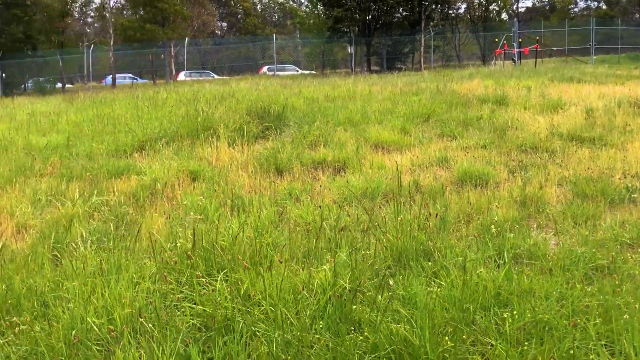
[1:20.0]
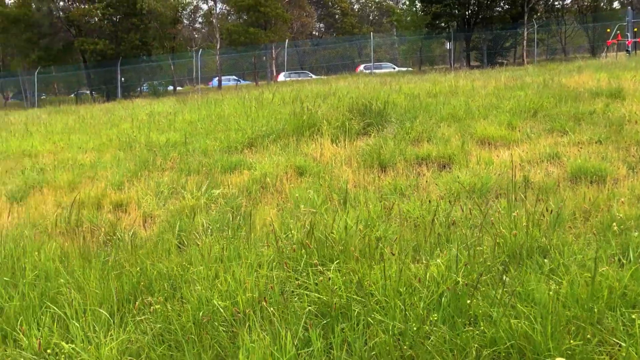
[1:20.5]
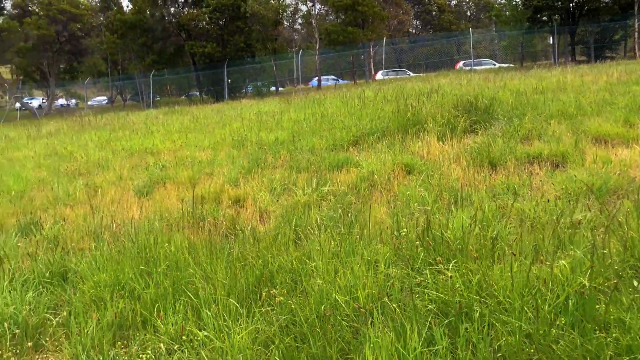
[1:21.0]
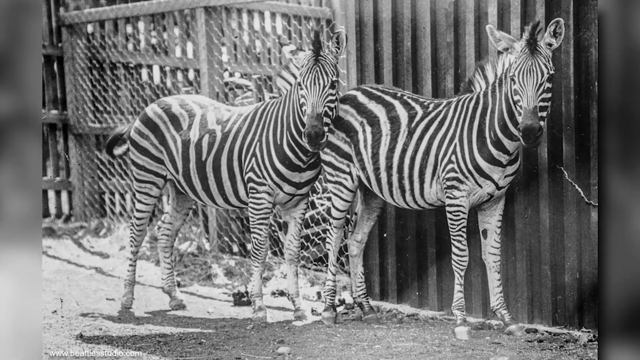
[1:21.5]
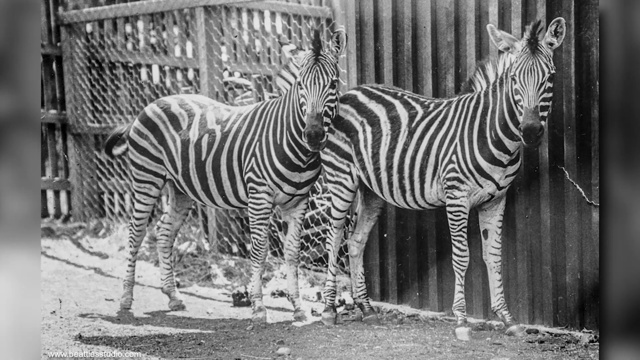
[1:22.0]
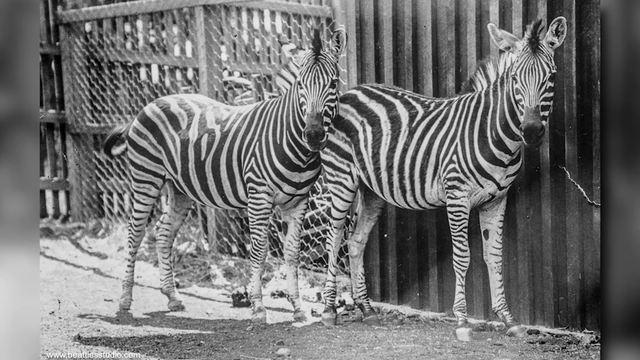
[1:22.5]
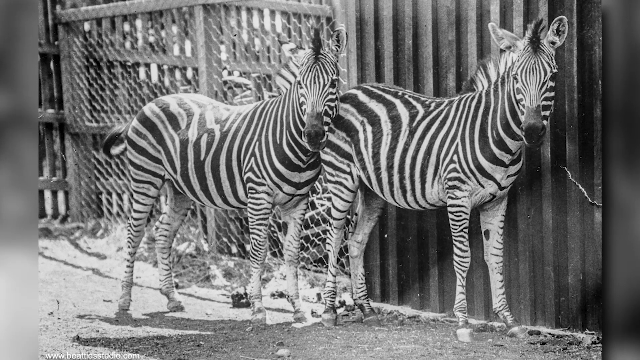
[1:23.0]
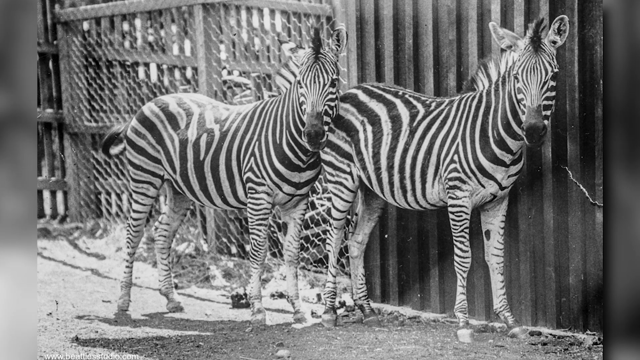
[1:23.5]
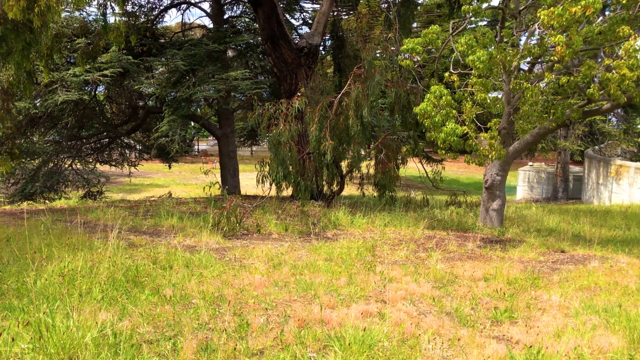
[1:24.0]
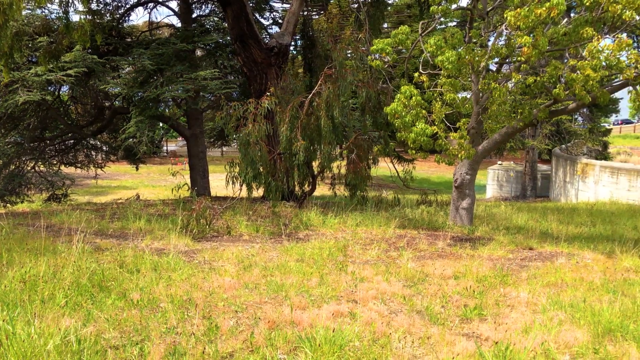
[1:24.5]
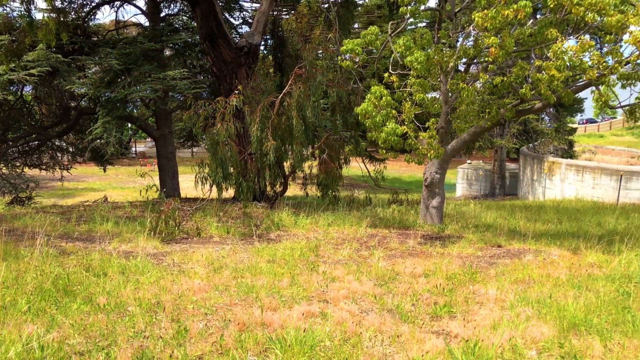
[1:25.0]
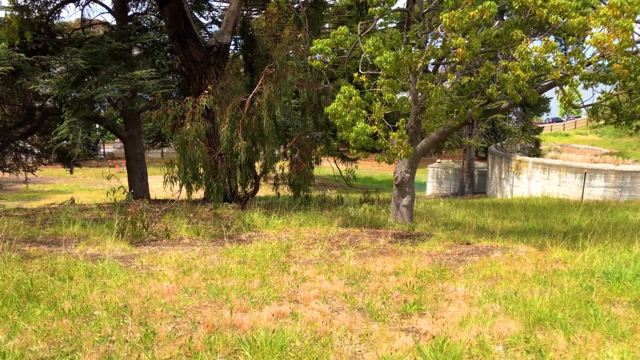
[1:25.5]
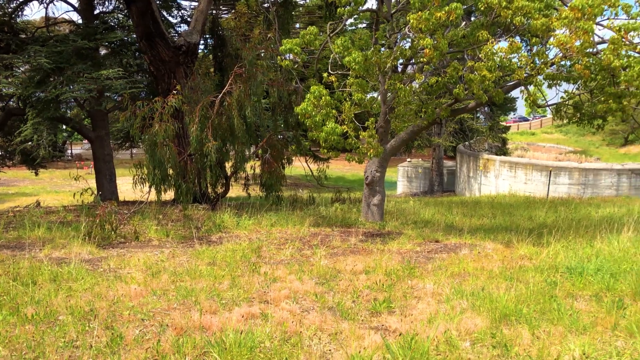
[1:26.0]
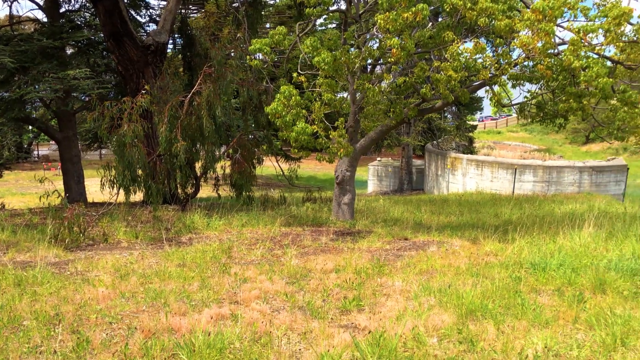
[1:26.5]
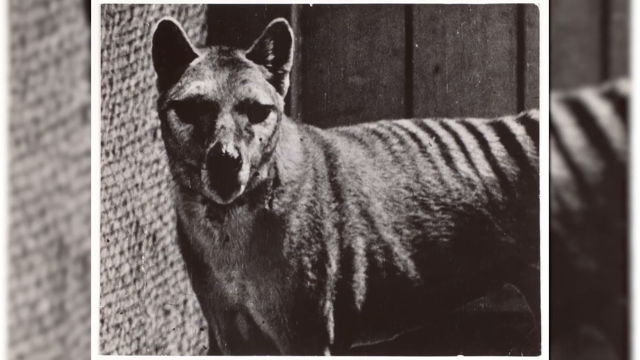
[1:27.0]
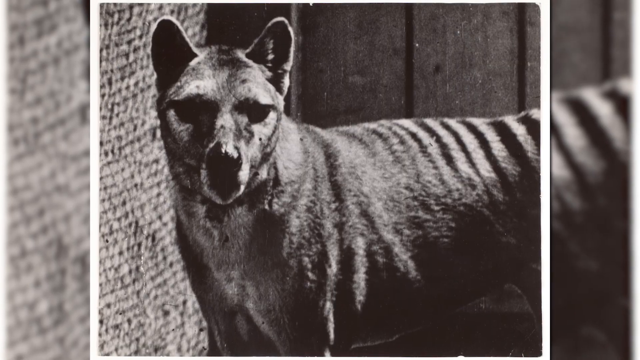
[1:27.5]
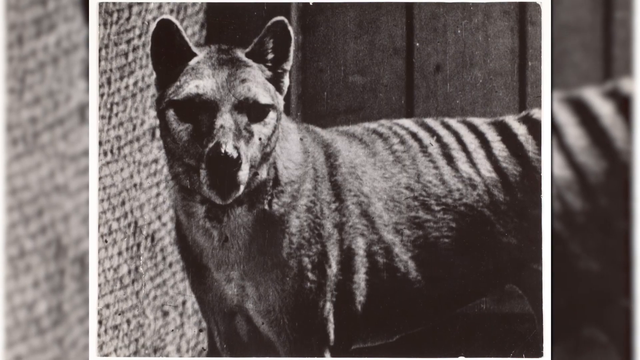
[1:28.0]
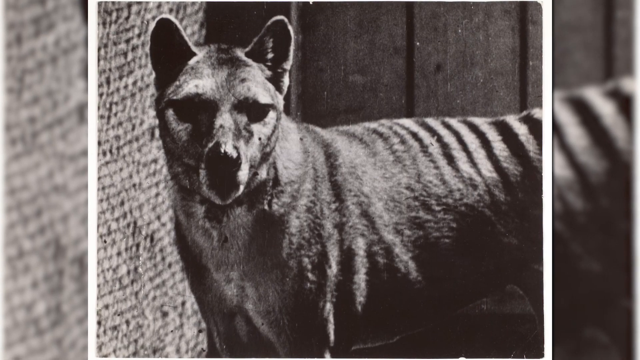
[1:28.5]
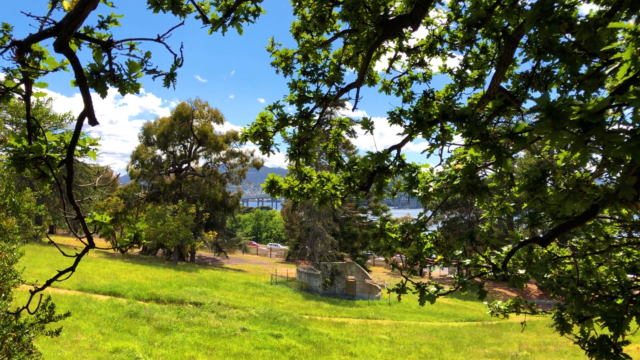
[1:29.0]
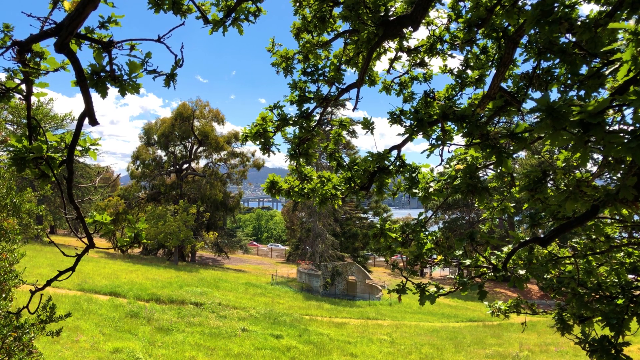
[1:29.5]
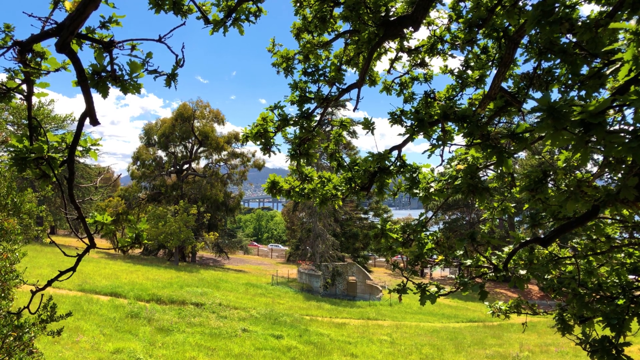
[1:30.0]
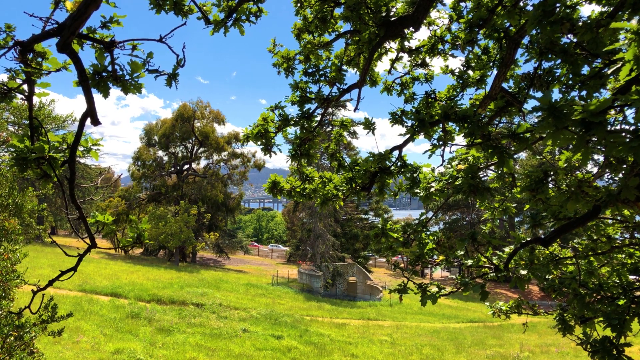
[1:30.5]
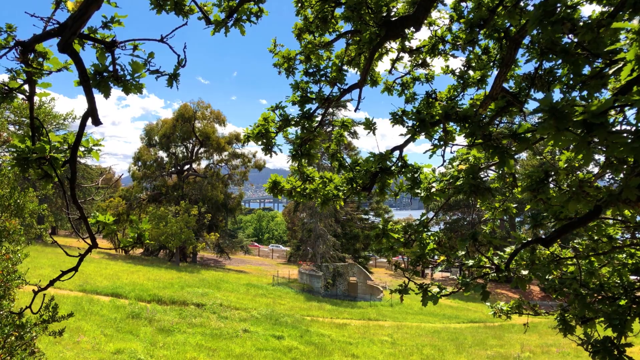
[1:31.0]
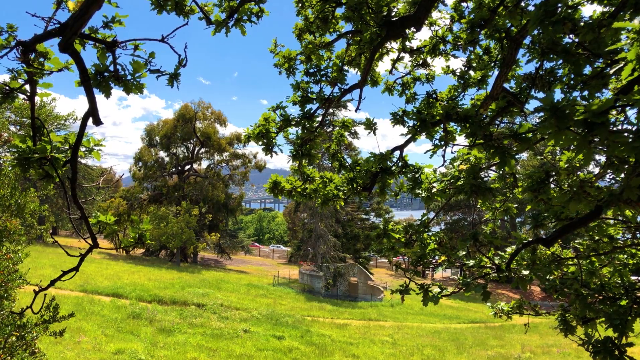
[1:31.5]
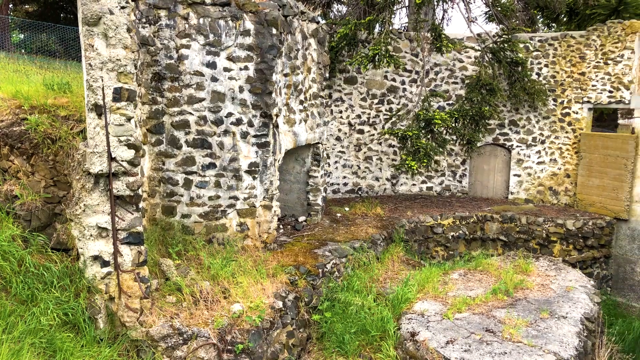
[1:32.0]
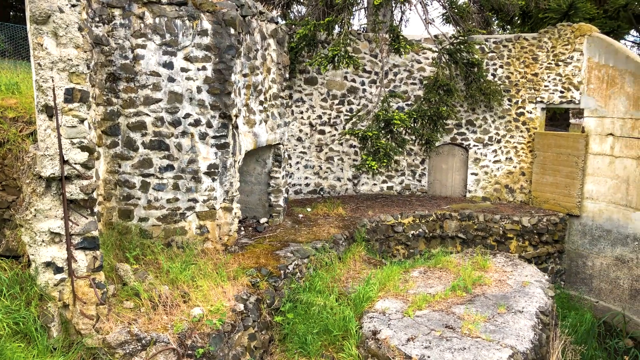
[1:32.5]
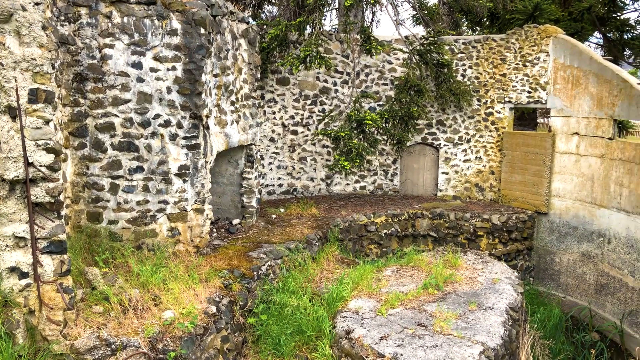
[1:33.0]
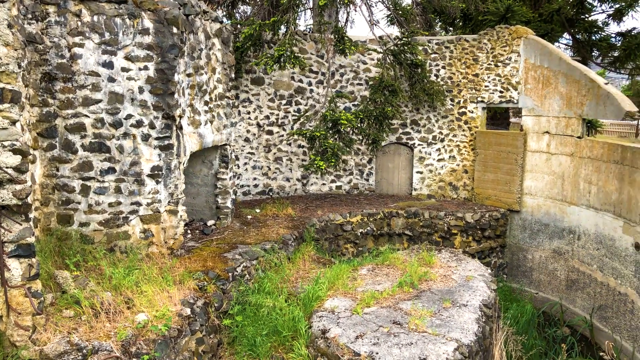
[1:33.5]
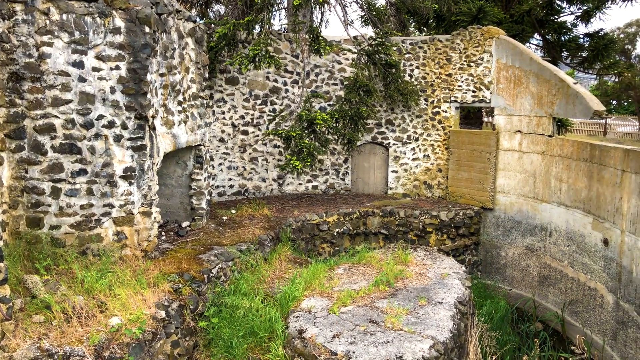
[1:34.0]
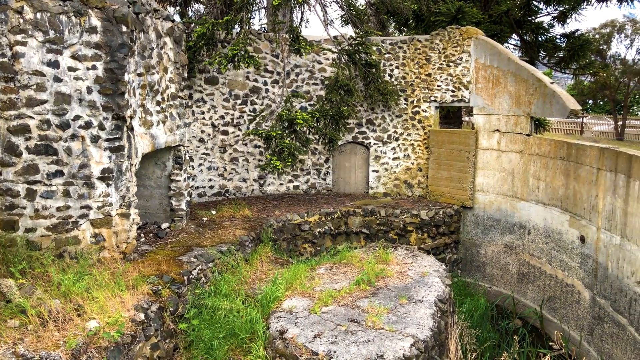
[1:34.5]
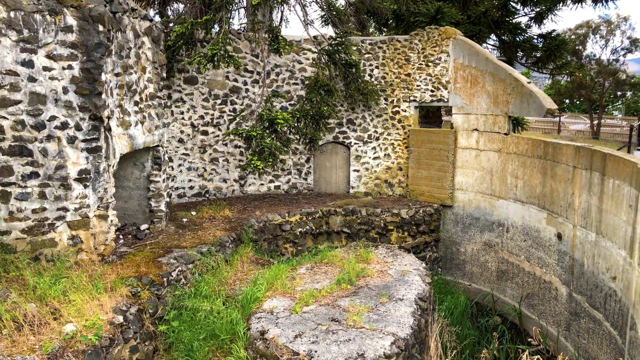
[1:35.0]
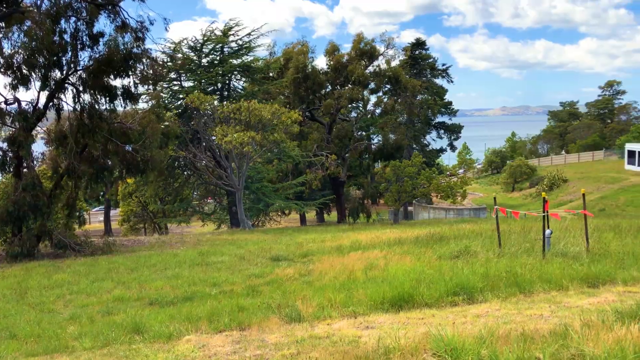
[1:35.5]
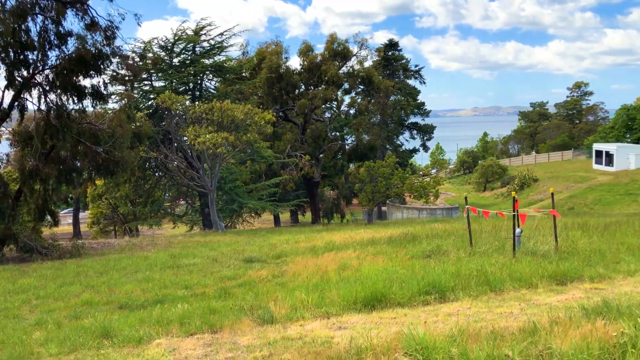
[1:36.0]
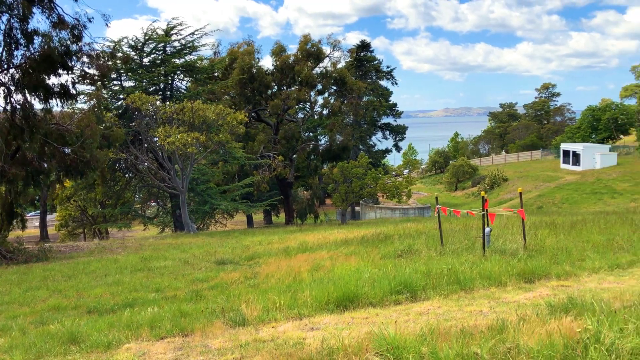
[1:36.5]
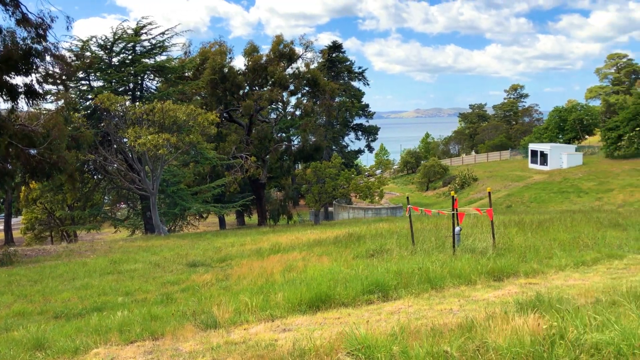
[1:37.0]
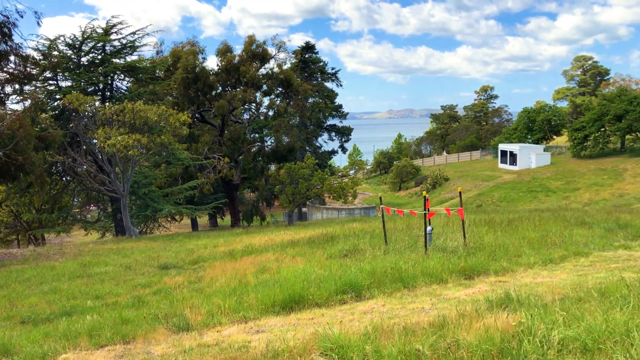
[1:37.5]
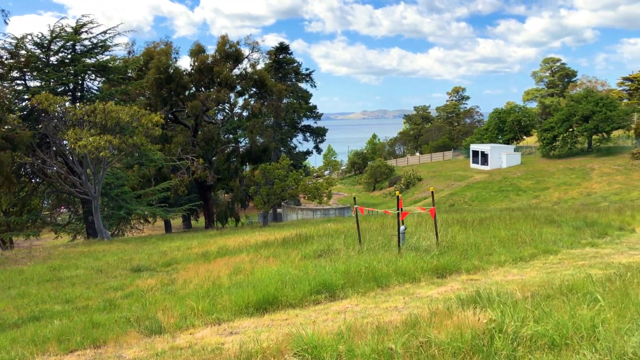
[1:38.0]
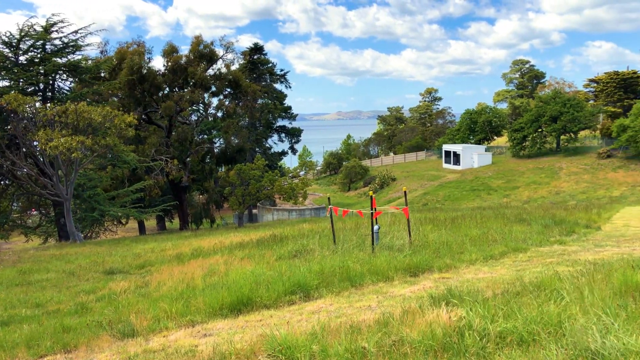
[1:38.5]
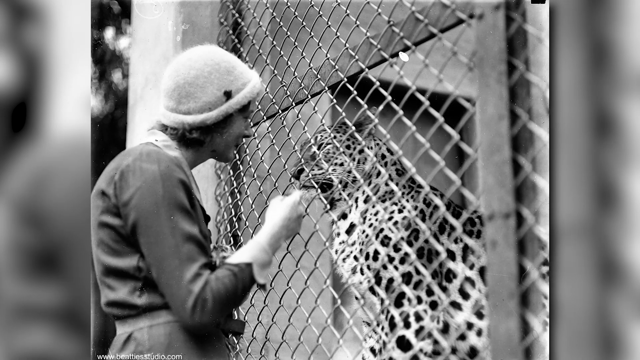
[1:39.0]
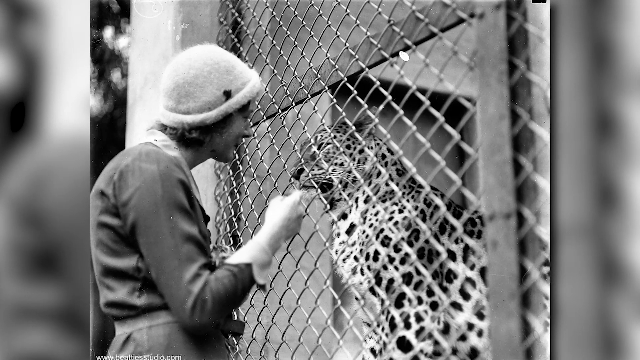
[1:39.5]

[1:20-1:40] The camera moves to the left, and then a black and white picture shows two zebras, both looking toward the camera in the same pose. Behind one of them, on the left side, there appears to be a chain-link fence. The scene changes to a grass field with trees that looks like a park, as the camera moves to the right. A black and white image then shows an animal that looks like a wolf, looking toward the camera. Next comes the park area with a grass field and trees in the distance; on the right side, beyond a tree that blocks part of the view, is an area of water, and what looks like a car drives on a road on the right. The scene changes to a very old, stone-like building shown in black and white; the camera moves to the right, revealing that the building is rusty. Another area of the park follows, with grass at the bottom, a lot of trees on the left side, and some sort of little white building on the right in the distance on the grass field. The camera keeps moving to the right, and then a black and white still image shows a woman interacting with what looks like a cheetah or a leopard behind a chain-link fence. She appears to be giving the leopard something to eat with her hand and is extremely close to the fence of the cage. The woman wears a white hat and what looks like long gloves and a dress.